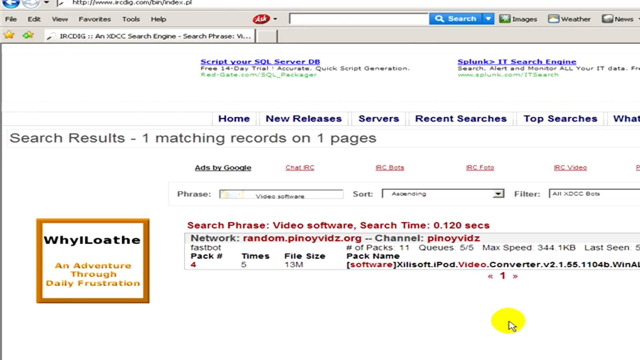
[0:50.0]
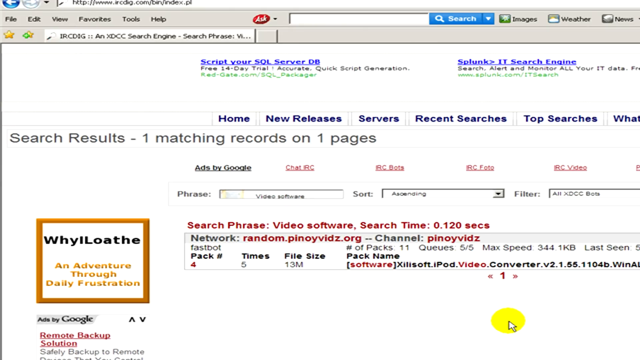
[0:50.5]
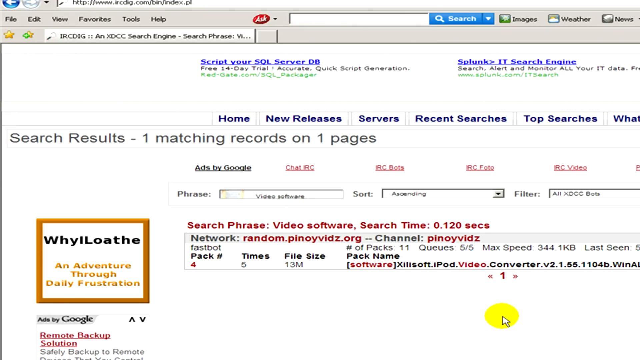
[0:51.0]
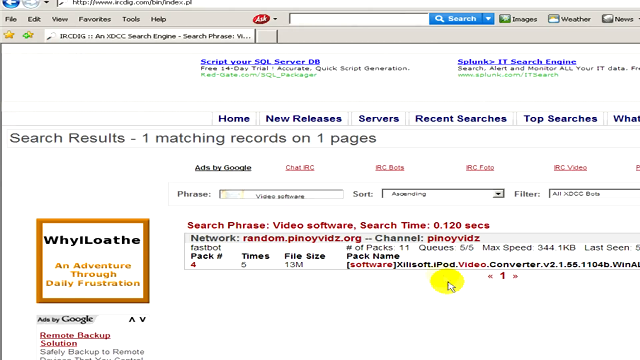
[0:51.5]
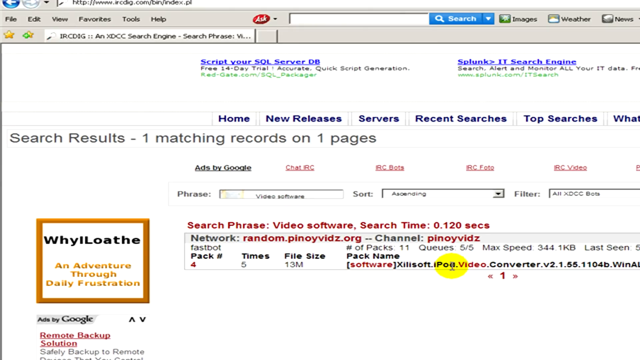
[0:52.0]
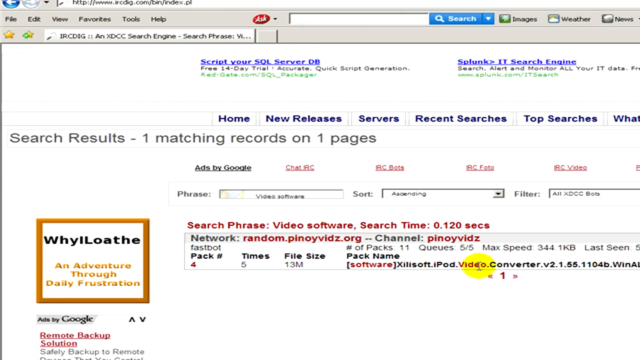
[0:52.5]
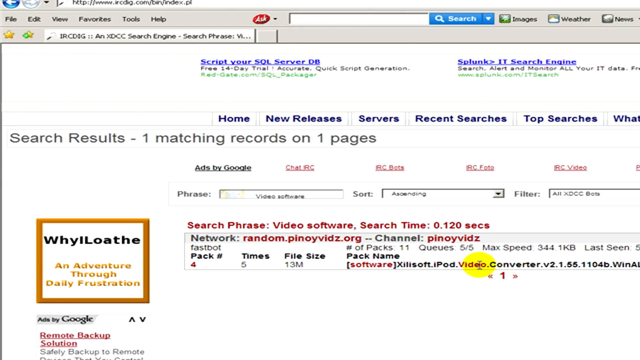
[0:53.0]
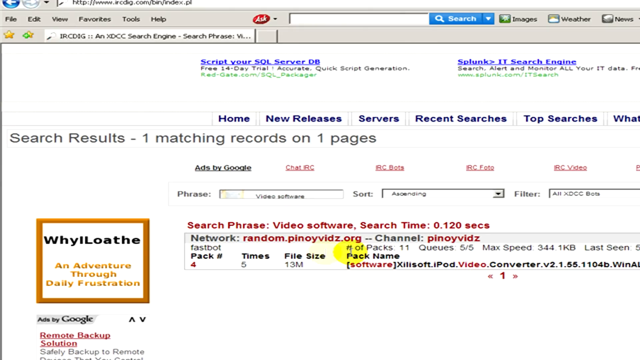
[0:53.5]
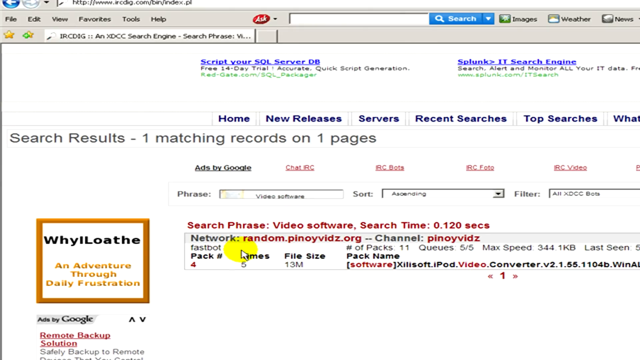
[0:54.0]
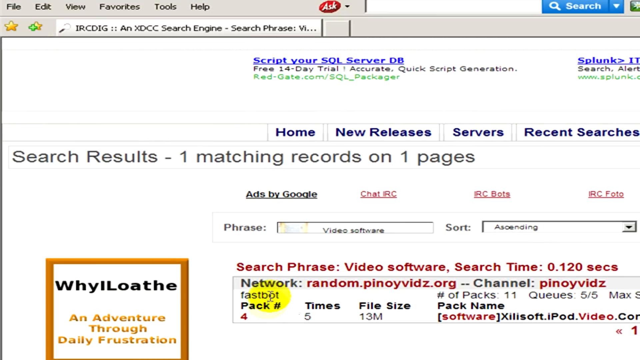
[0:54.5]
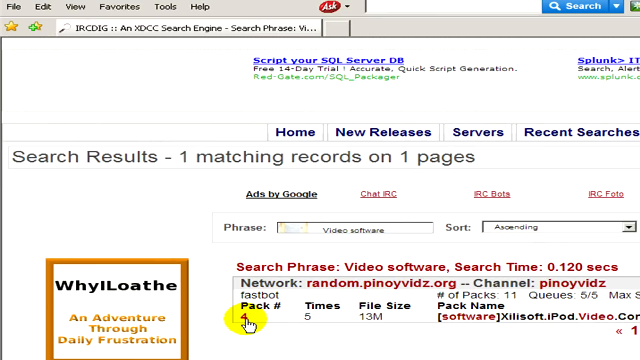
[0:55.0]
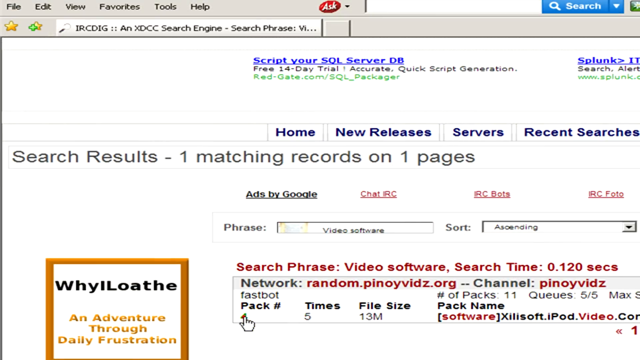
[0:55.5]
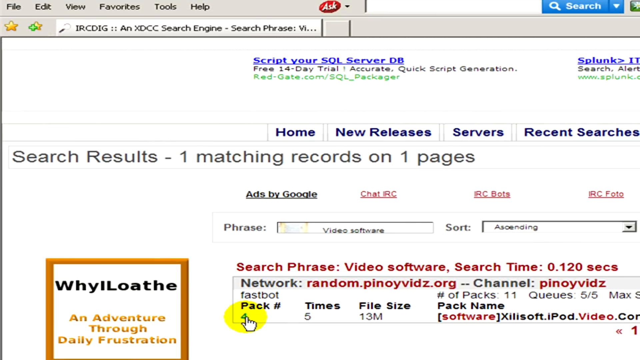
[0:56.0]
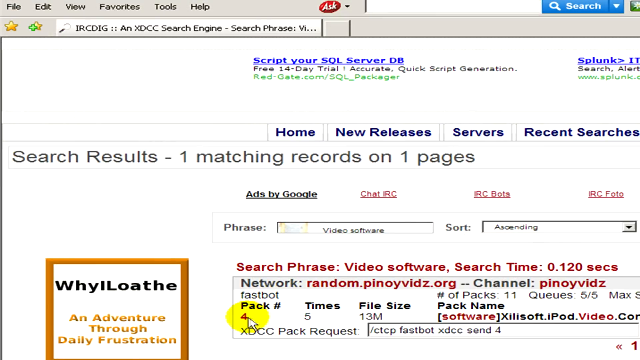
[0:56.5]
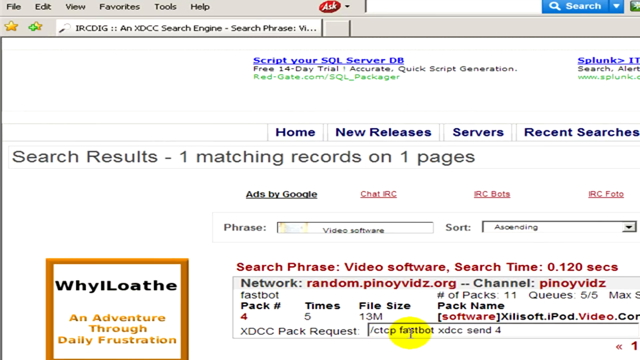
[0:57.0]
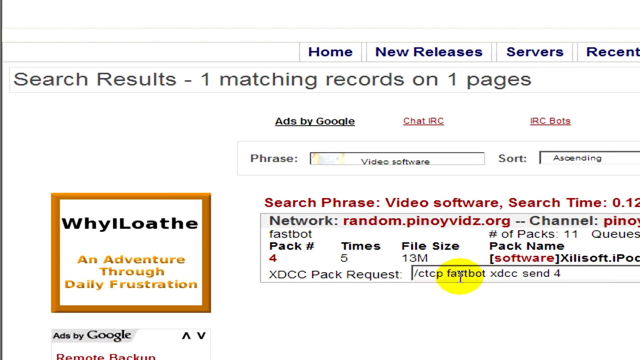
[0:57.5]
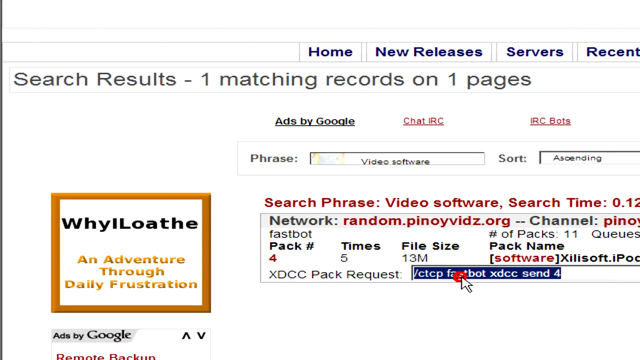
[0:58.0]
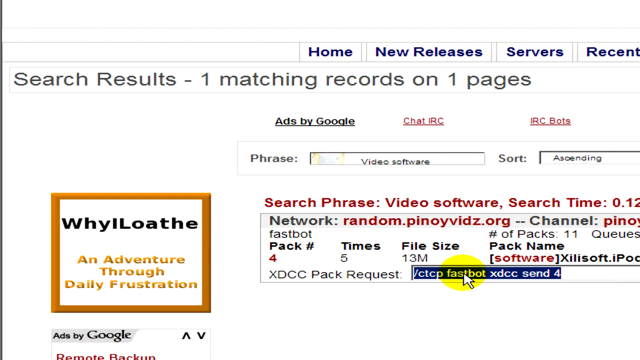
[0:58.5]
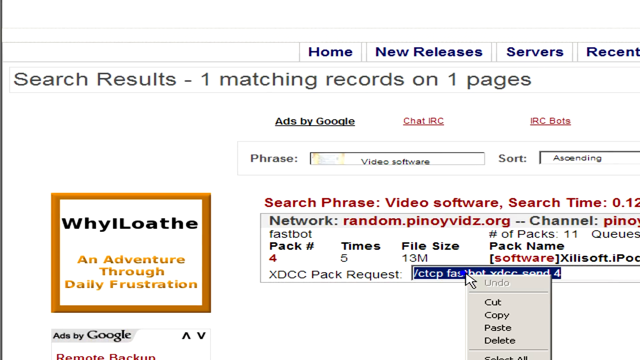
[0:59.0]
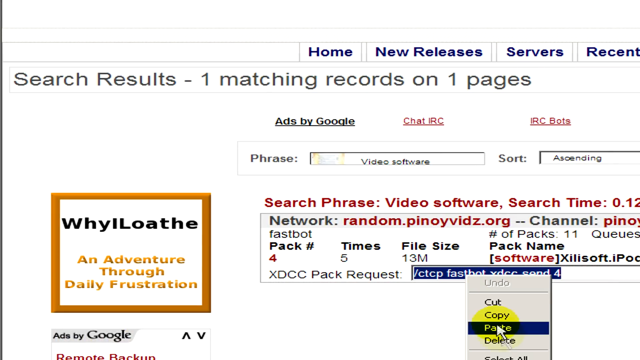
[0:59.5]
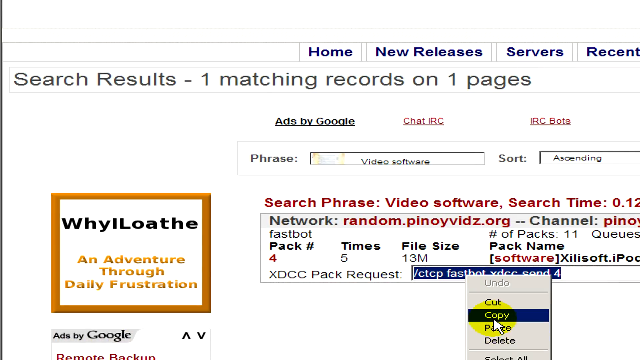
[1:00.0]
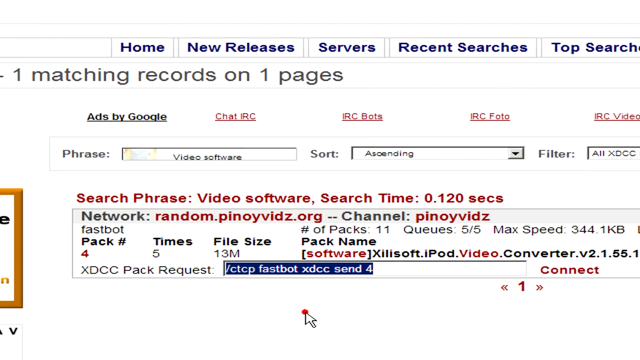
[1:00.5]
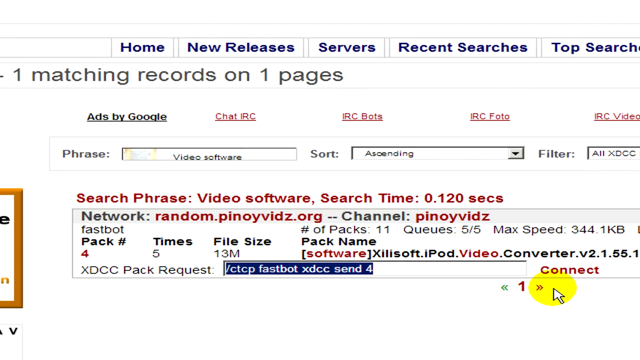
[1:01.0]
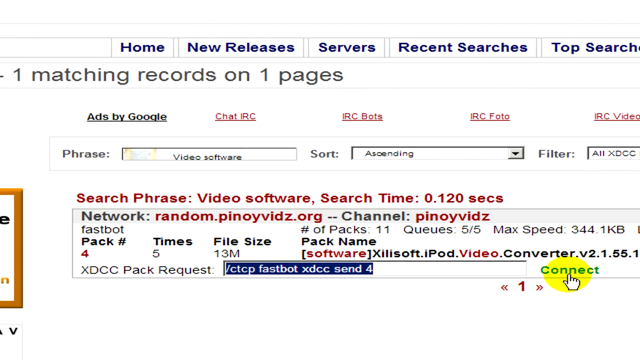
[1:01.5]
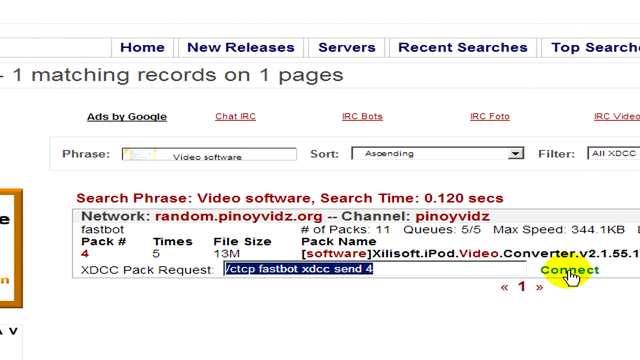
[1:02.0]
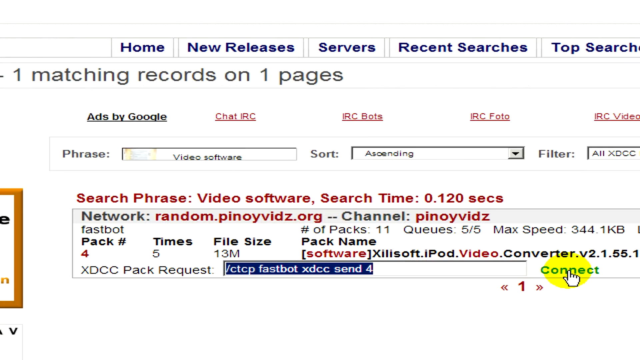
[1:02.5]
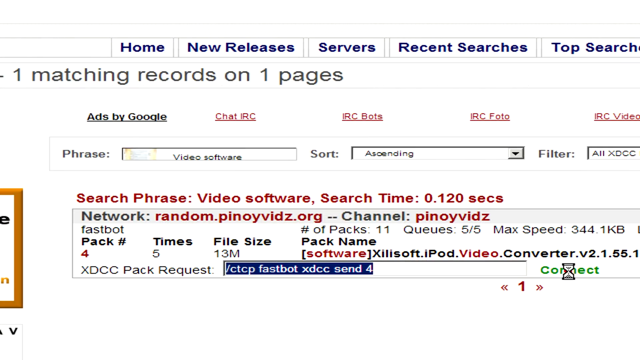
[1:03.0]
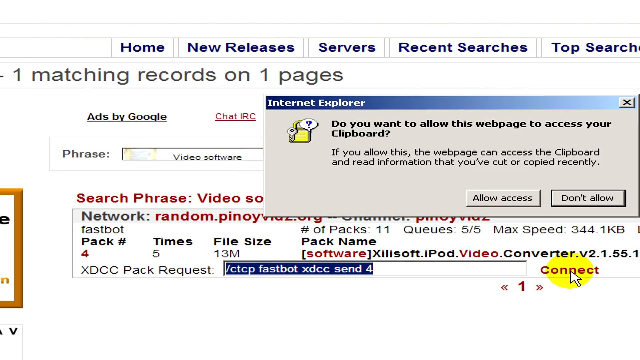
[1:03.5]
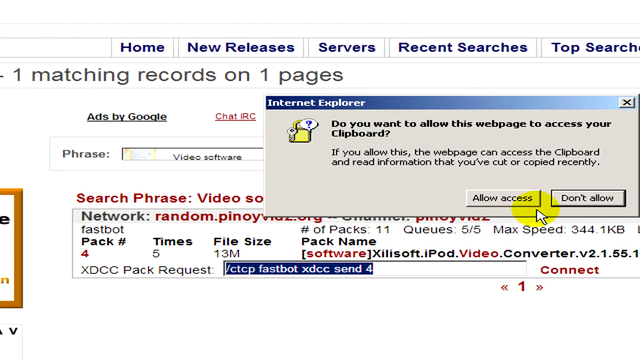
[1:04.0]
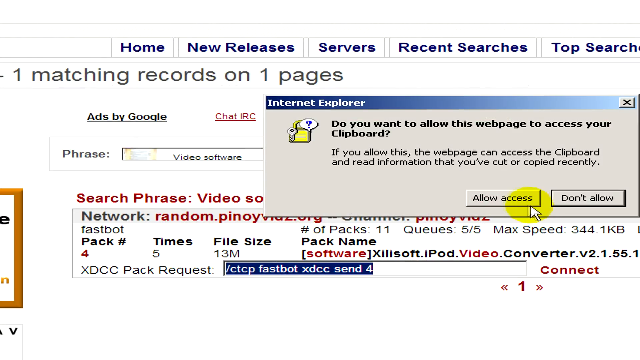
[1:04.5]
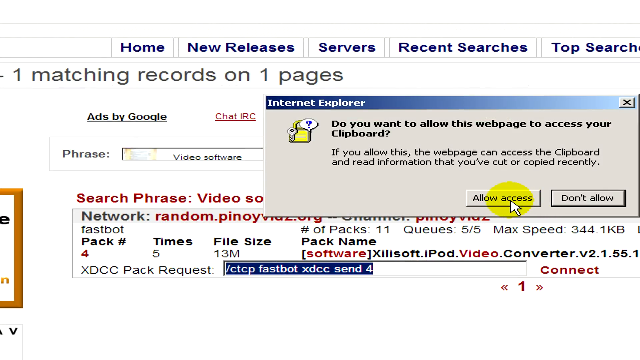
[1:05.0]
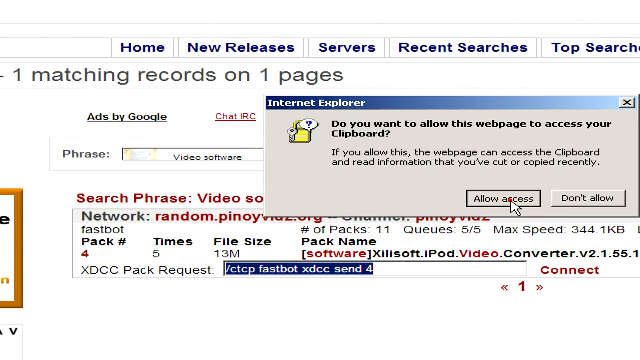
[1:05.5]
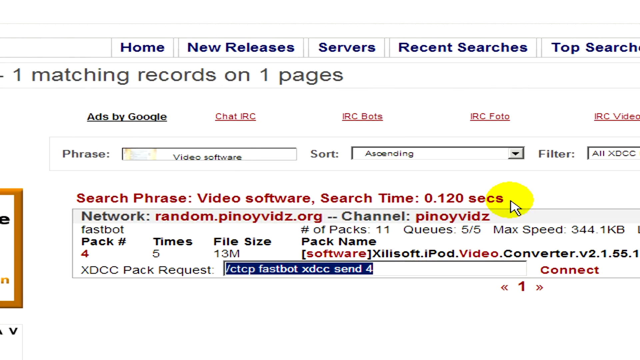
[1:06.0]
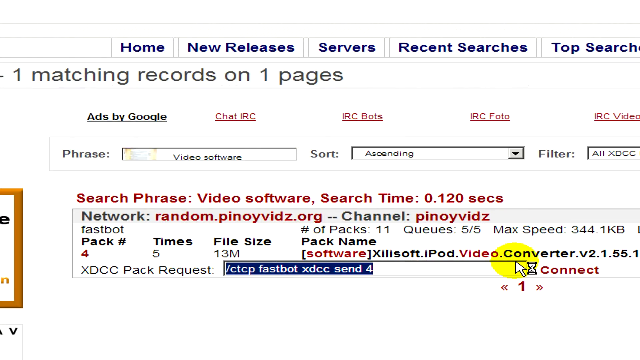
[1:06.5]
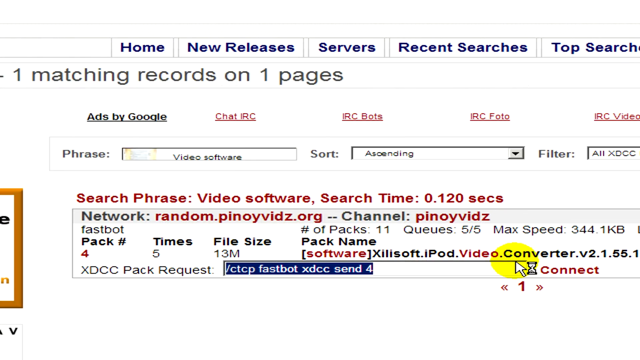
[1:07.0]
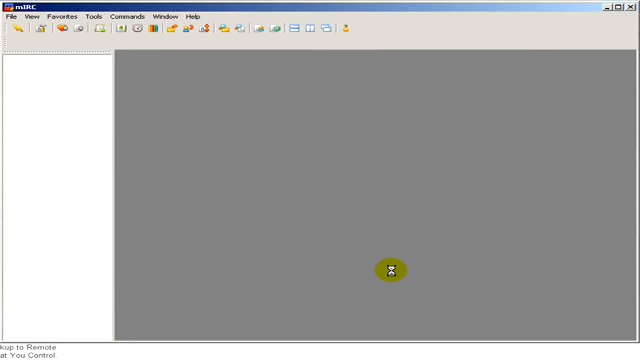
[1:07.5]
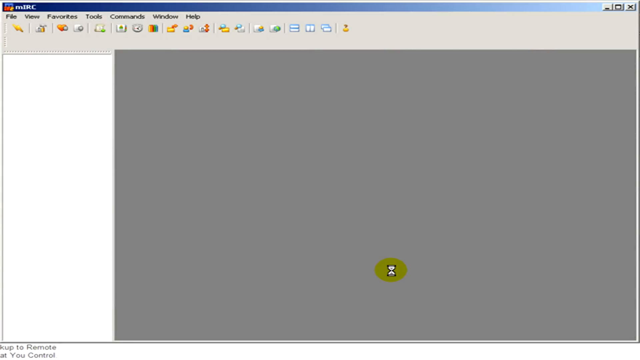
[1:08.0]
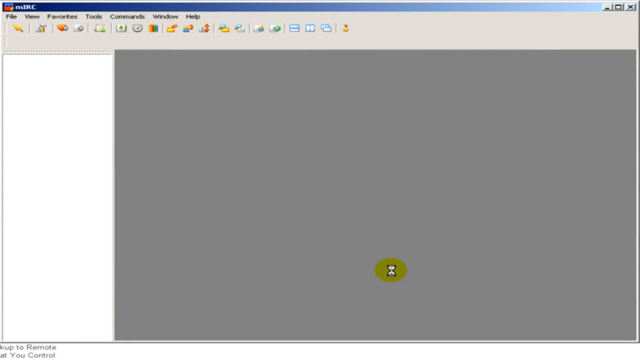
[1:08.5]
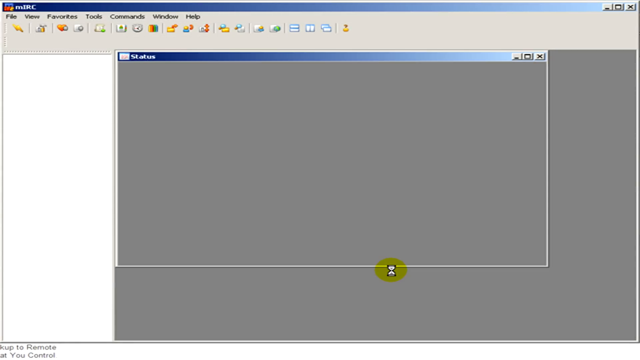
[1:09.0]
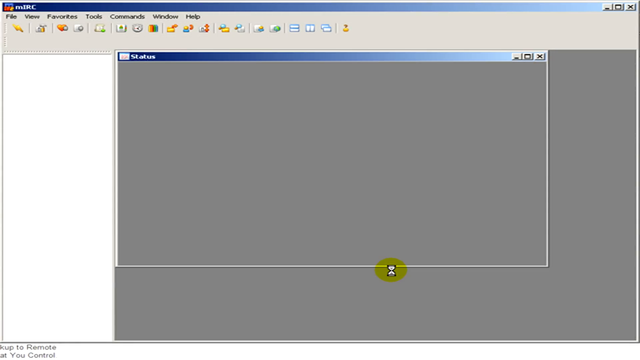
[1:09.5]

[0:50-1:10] The search results page shows the search phrase video software. A cursor highlighted in yellow moves around making different selections. It first goes over the pack number, which is four, then clicks on the pack request, where a number of words are written. The results also show other information, including a network listed as pinoyvids.org, along with file sizes, queues and speed. The cursor clicks the red Connect button, a small pop-up box appears, and it is clicked to allow access. After Access Allowed is clicked, results appear very briefly, too briefly to make out what is happening.